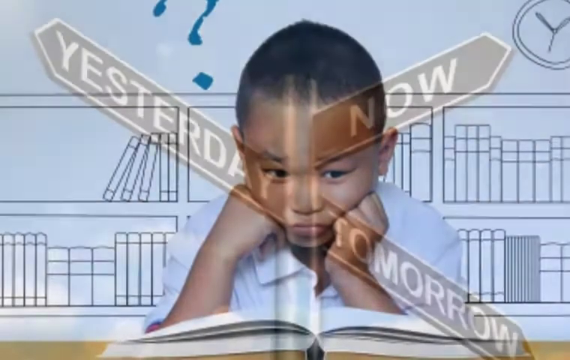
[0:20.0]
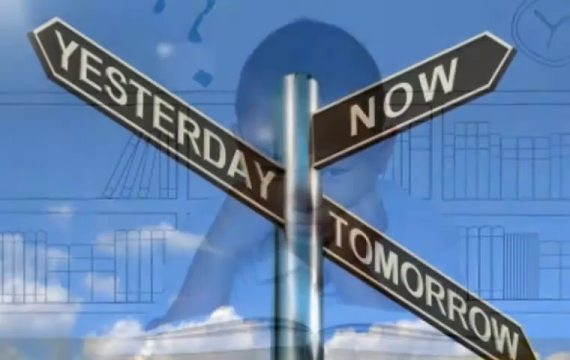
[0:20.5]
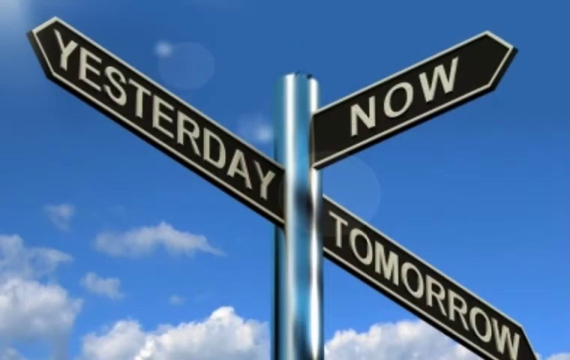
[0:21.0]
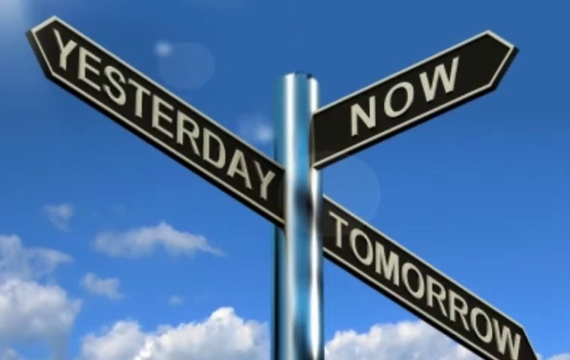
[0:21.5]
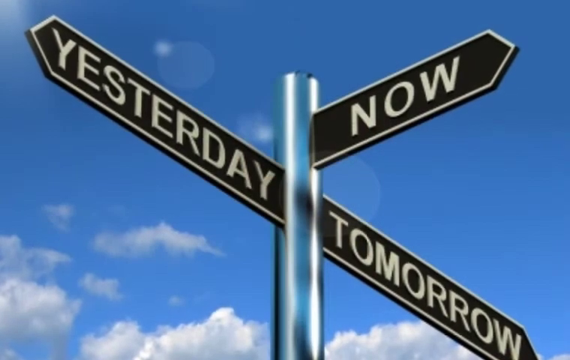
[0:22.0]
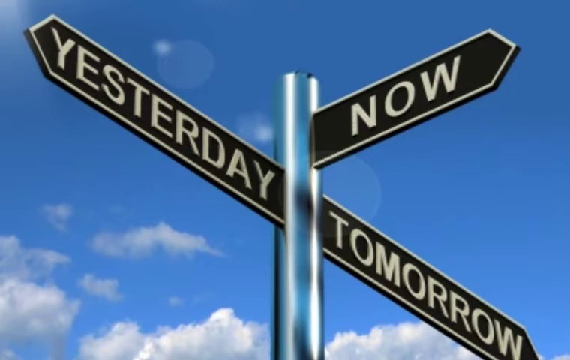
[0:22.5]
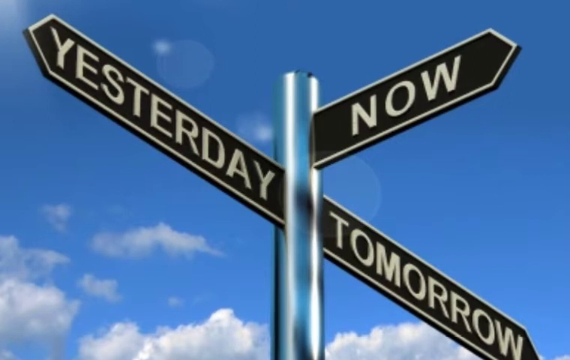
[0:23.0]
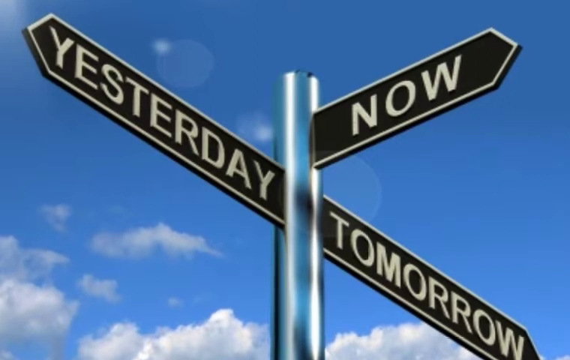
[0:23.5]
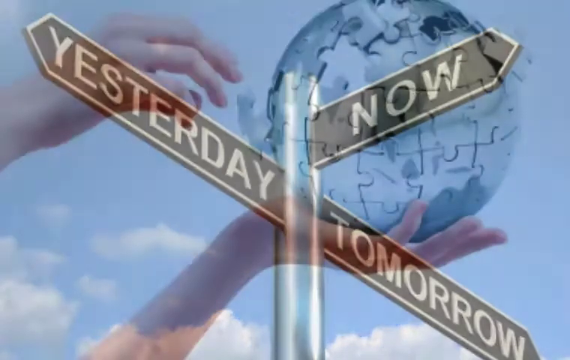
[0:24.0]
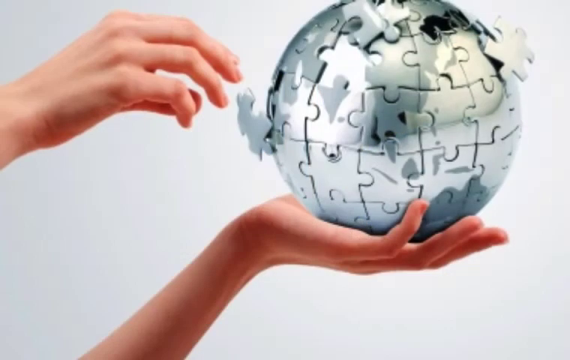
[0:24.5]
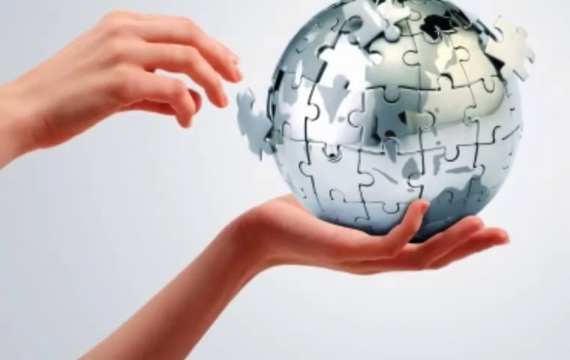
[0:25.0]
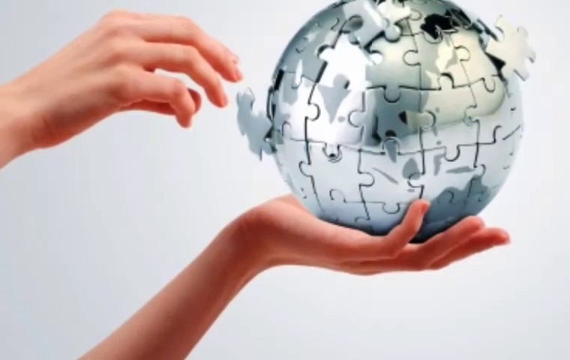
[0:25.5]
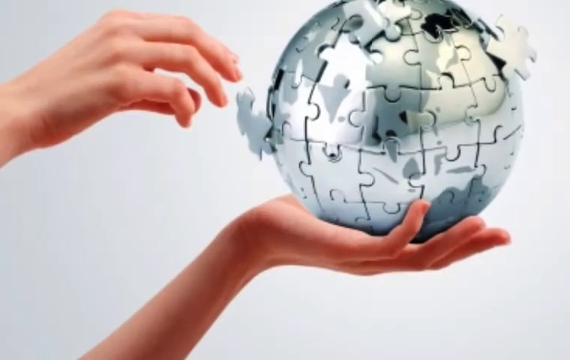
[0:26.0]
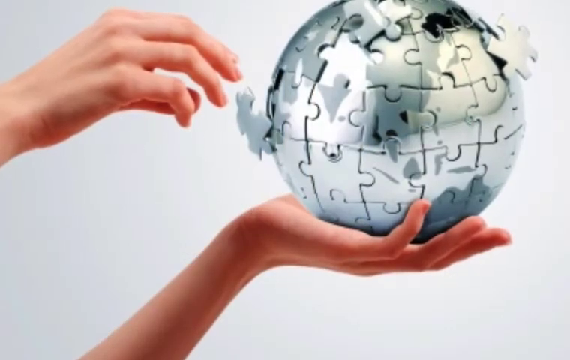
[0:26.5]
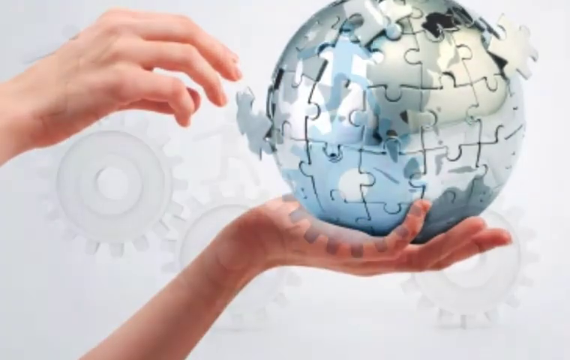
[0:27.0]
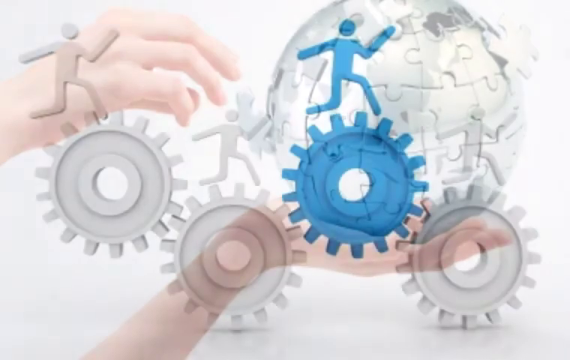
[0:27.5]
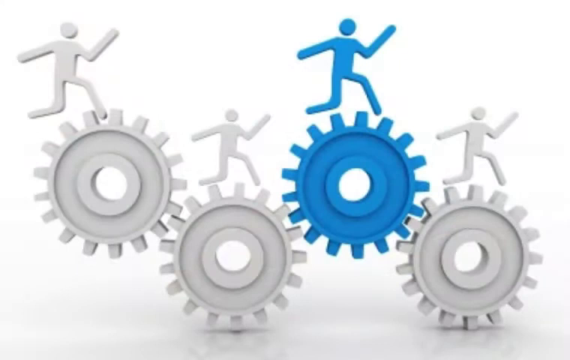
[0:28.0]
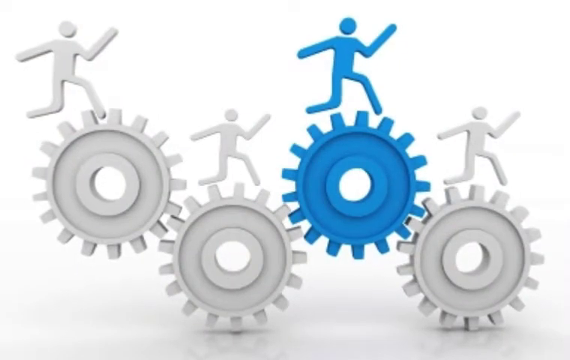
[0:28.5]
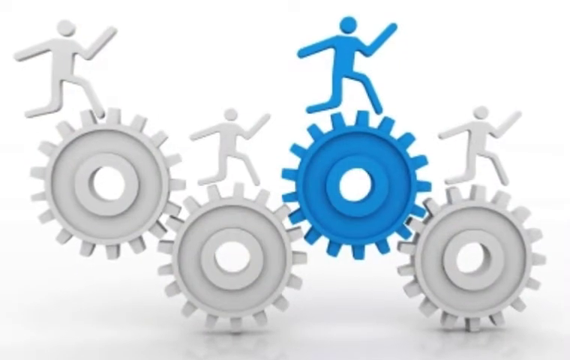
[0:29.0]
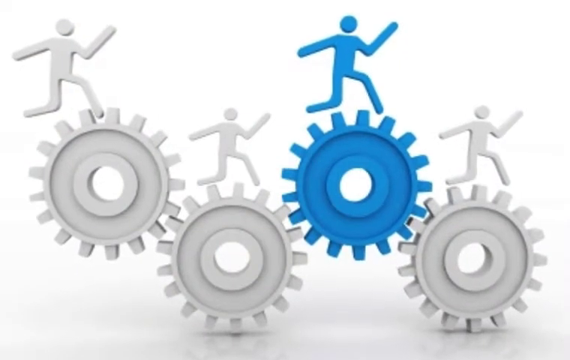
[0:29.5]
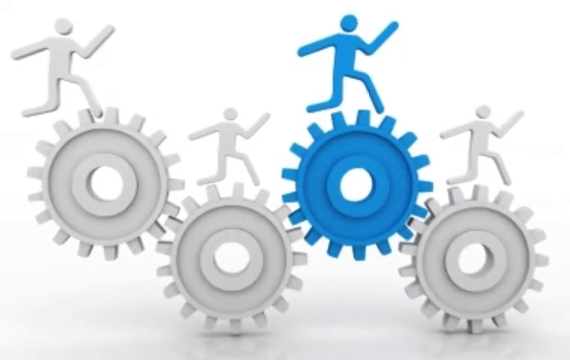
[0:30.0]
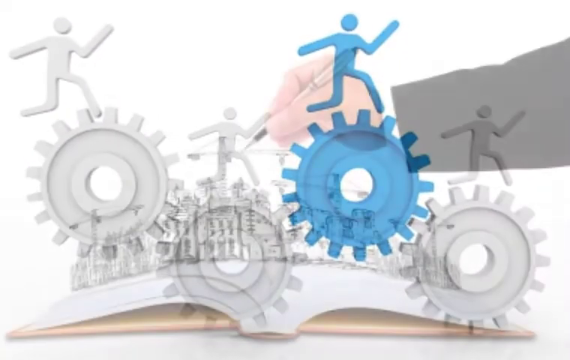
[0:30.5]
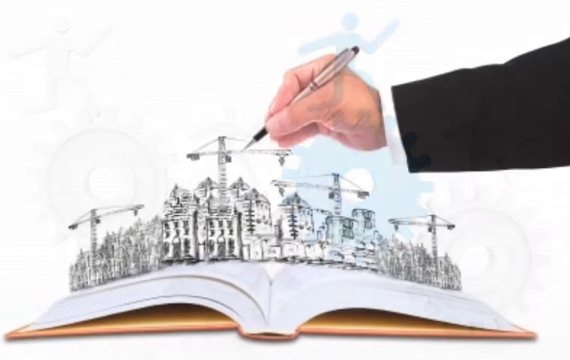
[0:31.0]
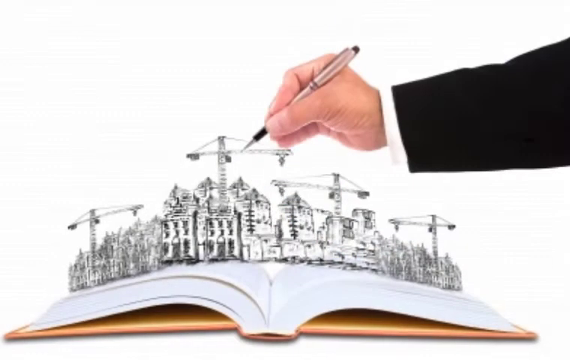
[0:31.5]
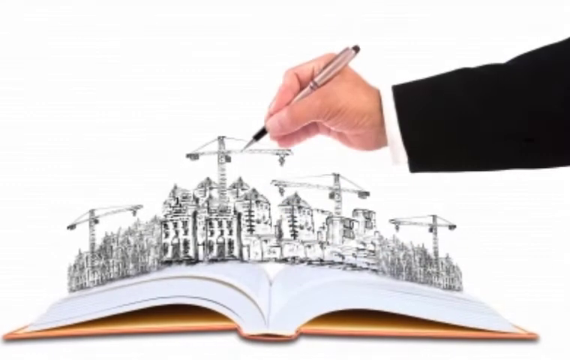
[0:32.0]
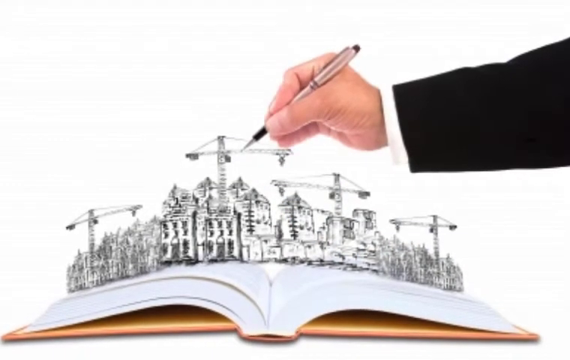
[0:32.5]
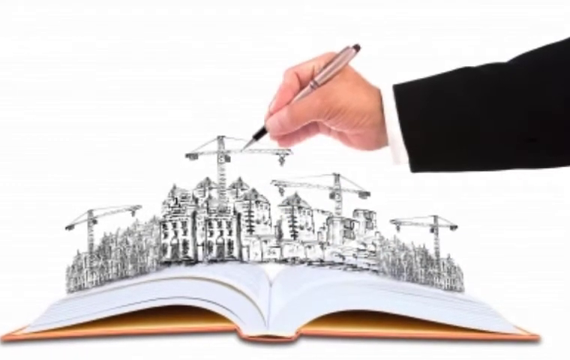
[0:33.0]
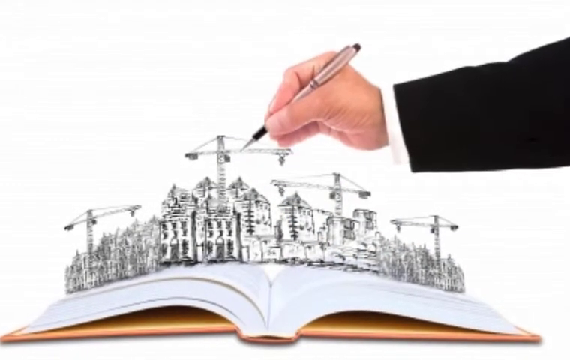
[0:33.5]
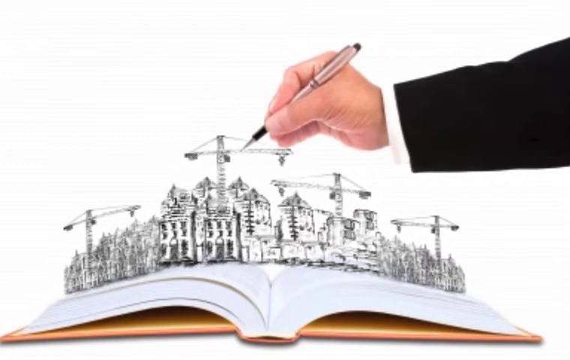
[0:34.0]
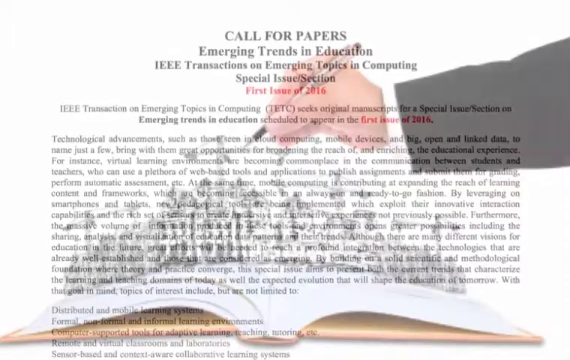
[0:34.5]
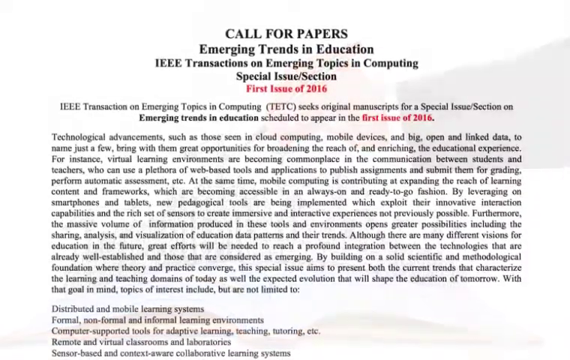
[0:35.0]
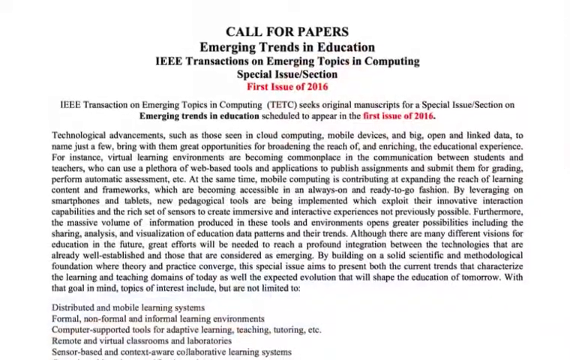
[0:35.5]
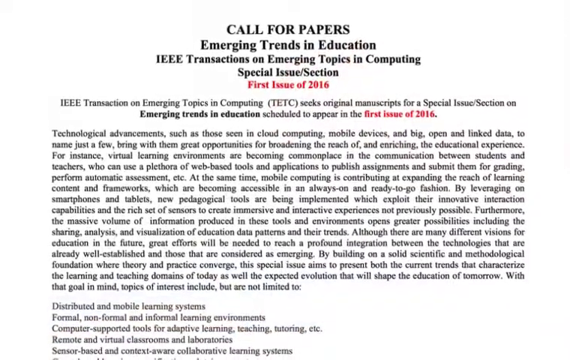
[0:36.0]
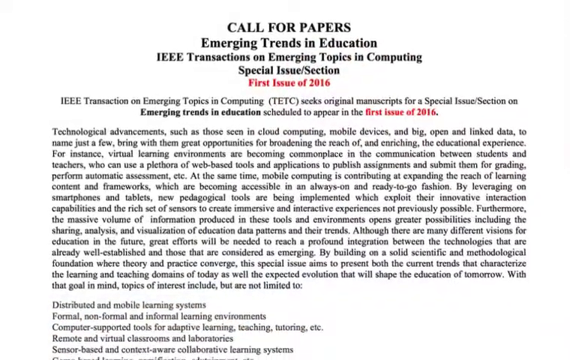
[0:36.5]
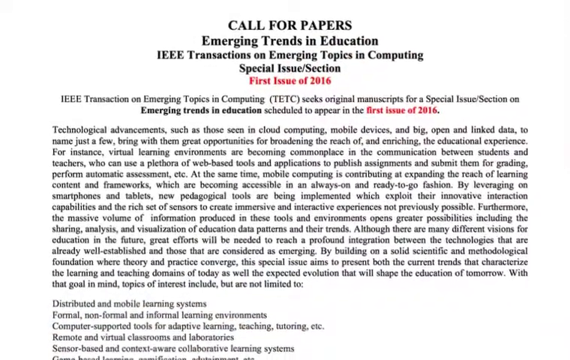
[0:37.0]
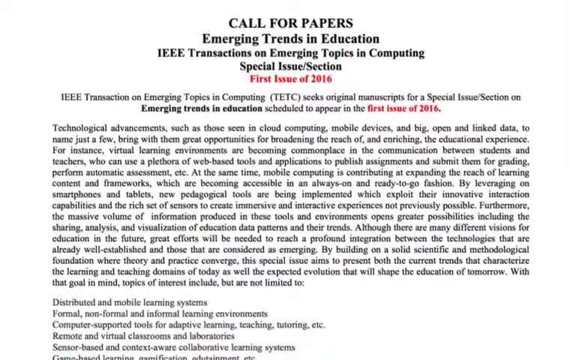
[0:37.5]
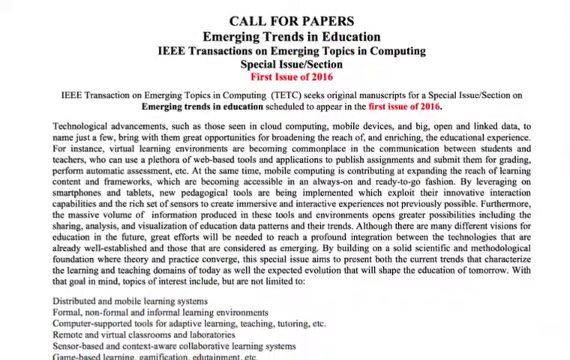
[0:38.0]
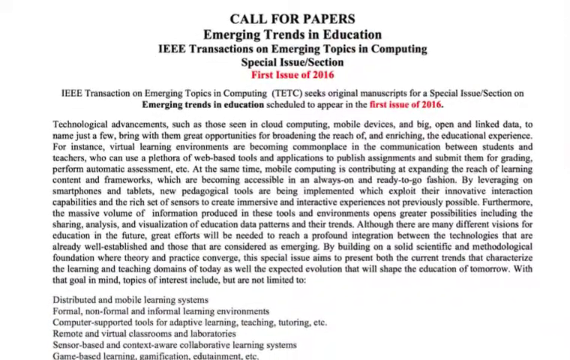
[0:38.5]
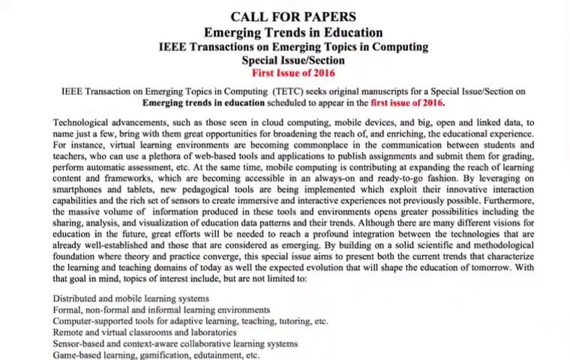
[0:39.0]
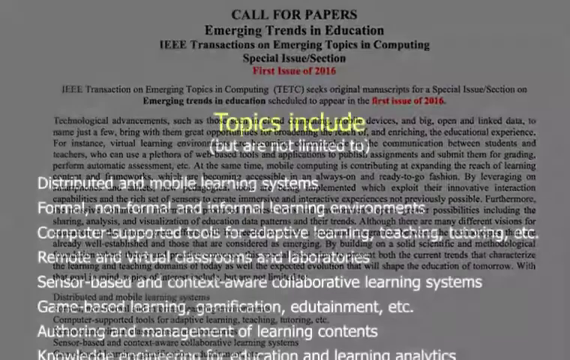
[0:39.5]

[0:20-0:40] A signpost points in different directions: one sign reads "yesterday", another points the other way reading "now", and another reads "tomorrow". Next, a hand holds a comic puzzle of a ball with the left hand while the other hand fixes the puzzle. Another image shows people riding wheels, like drawings, one in blue and the other in grey. Then a hand draws a sketch of a building in the book; the sleeve shows the person is wearing a black suit and a white shirt, but only the hand holding the pen is shown.